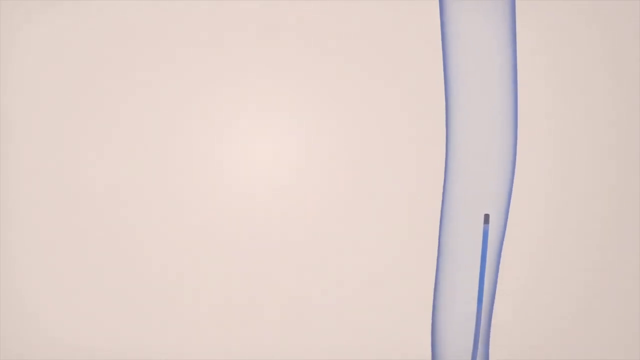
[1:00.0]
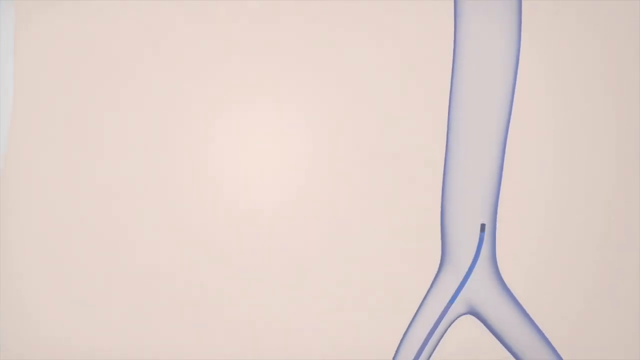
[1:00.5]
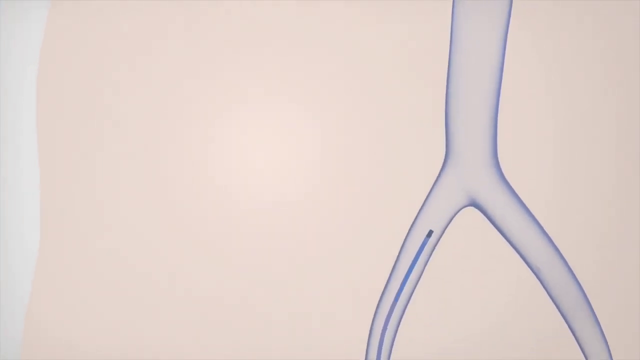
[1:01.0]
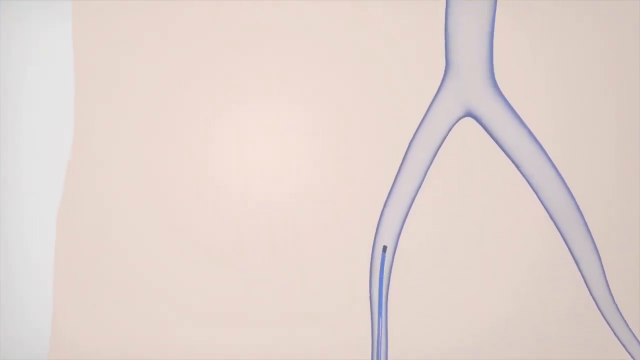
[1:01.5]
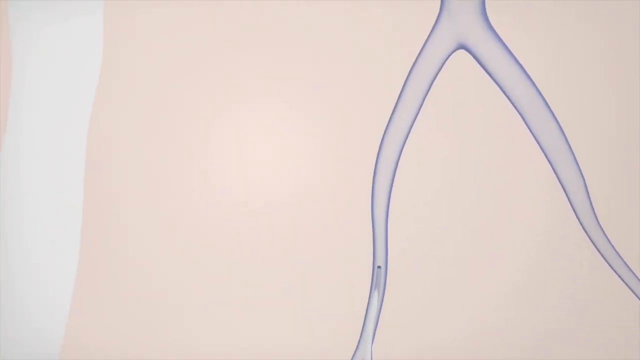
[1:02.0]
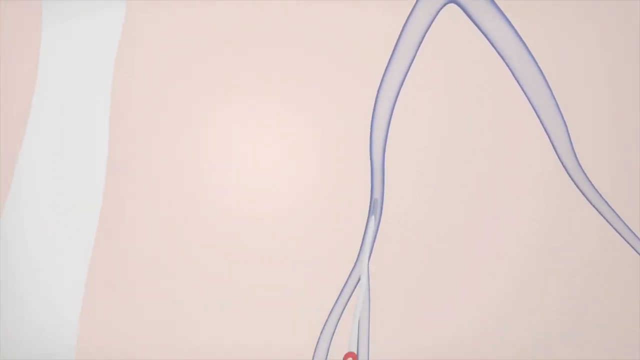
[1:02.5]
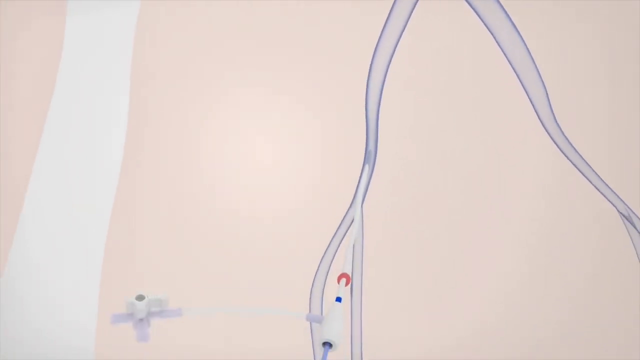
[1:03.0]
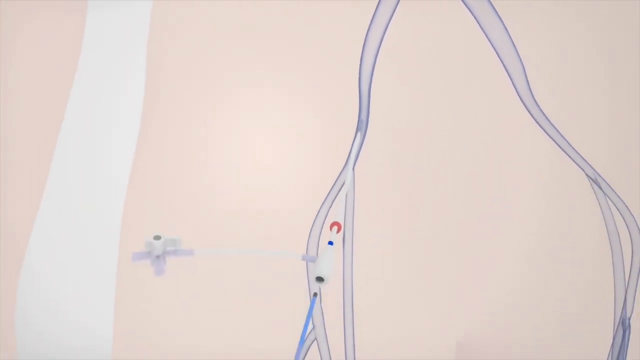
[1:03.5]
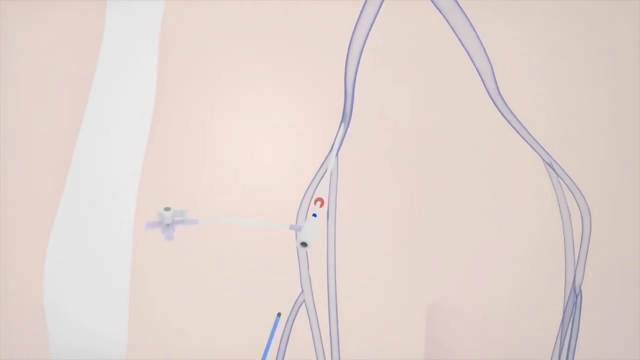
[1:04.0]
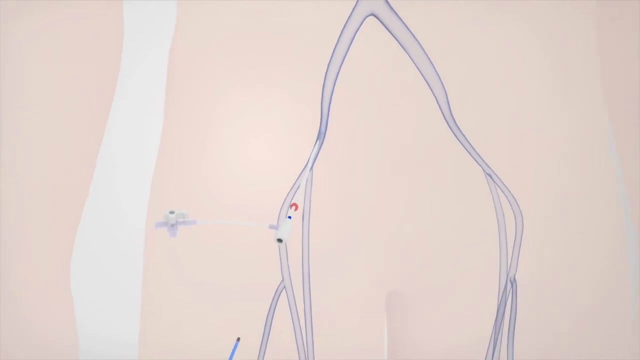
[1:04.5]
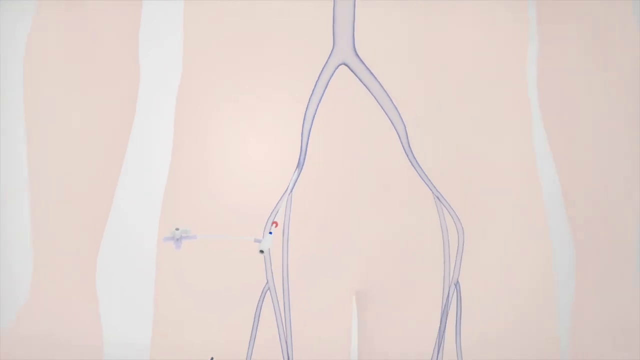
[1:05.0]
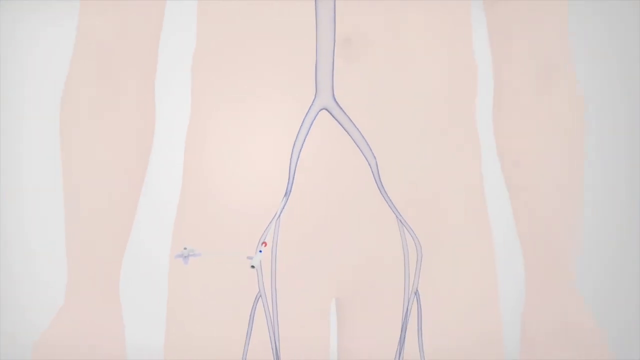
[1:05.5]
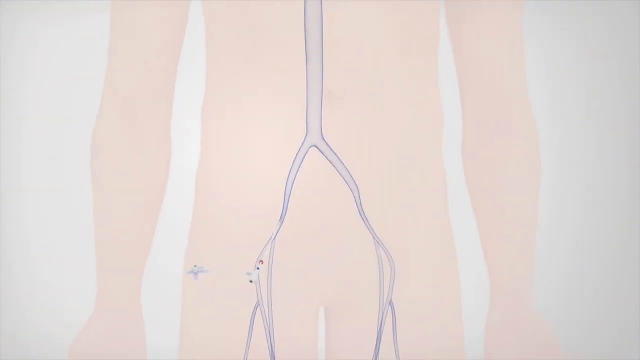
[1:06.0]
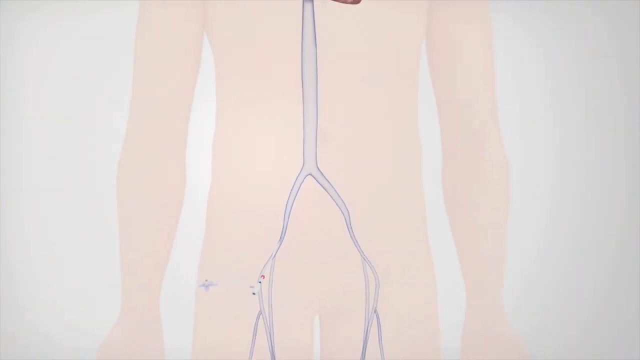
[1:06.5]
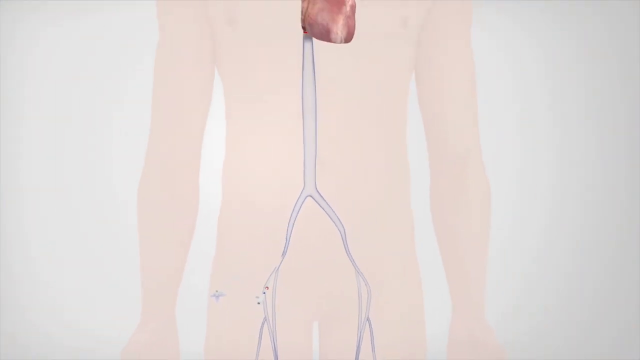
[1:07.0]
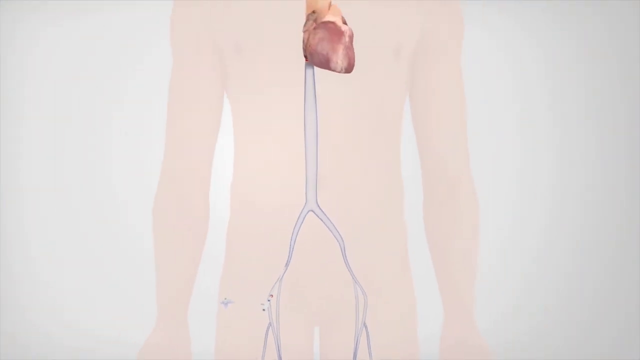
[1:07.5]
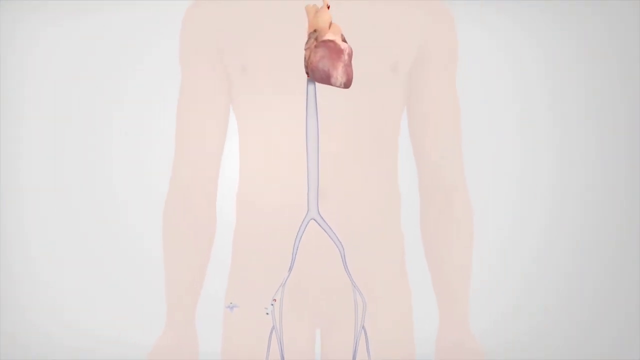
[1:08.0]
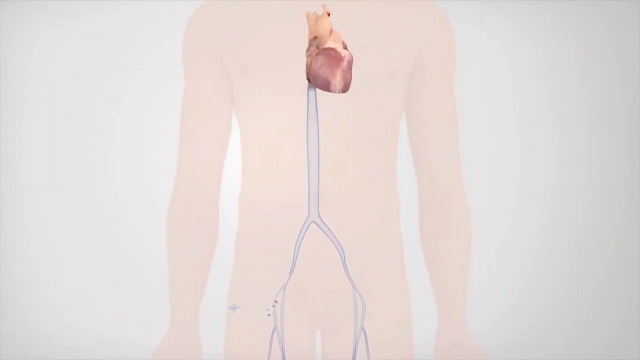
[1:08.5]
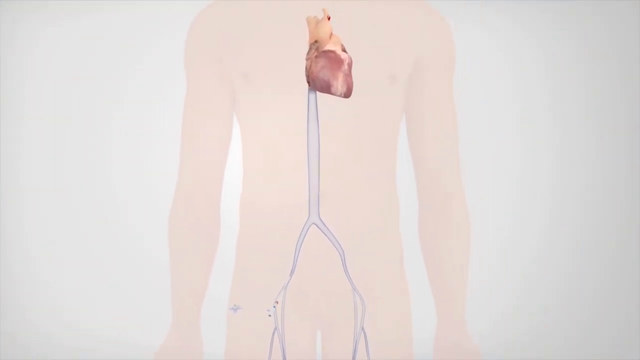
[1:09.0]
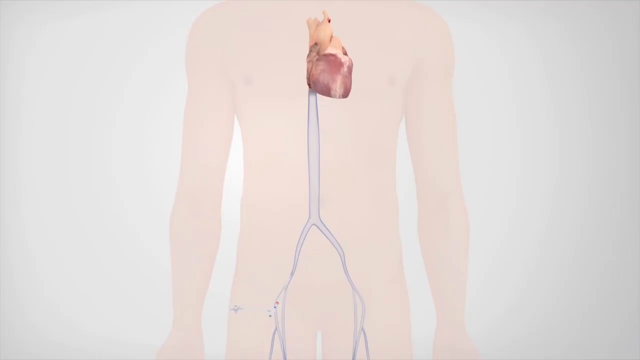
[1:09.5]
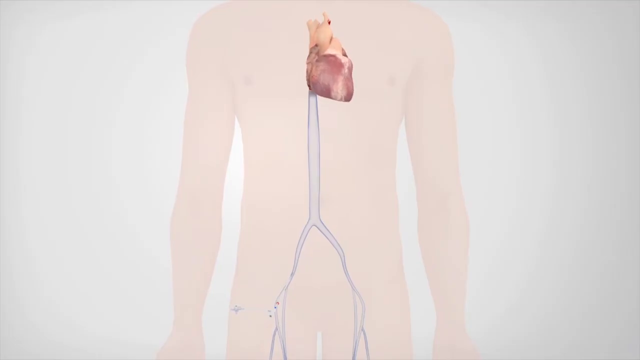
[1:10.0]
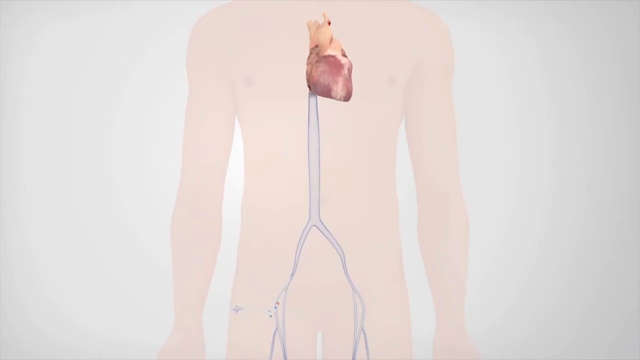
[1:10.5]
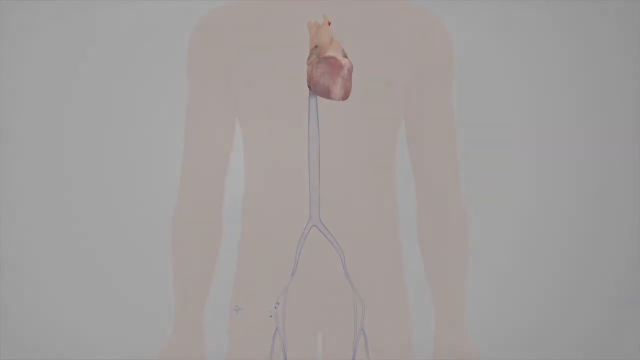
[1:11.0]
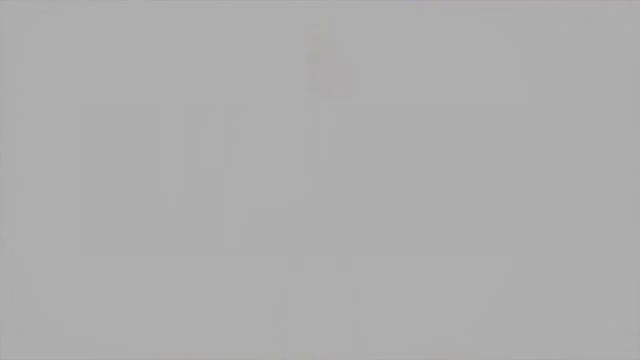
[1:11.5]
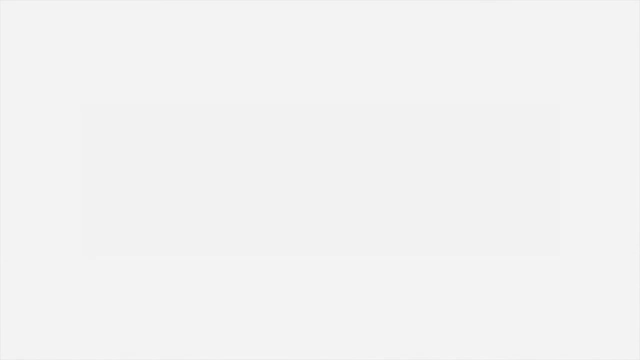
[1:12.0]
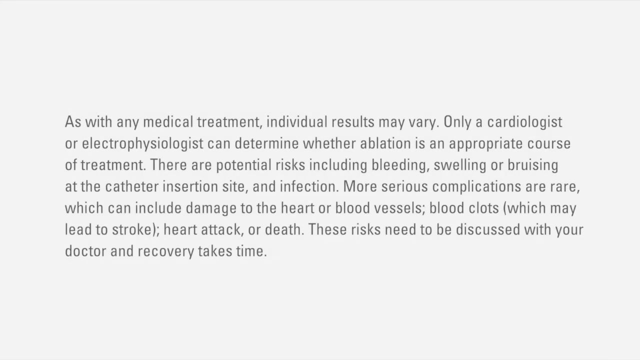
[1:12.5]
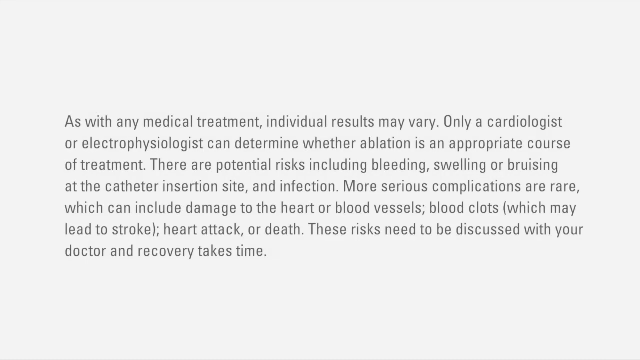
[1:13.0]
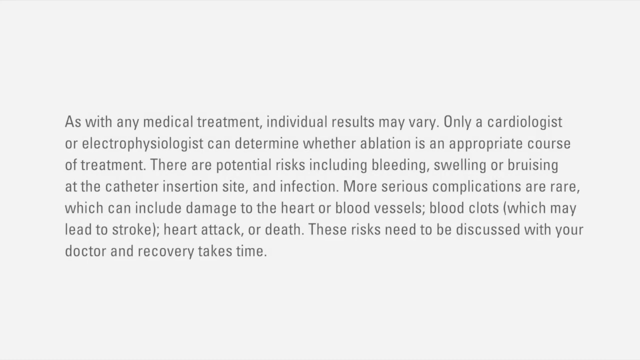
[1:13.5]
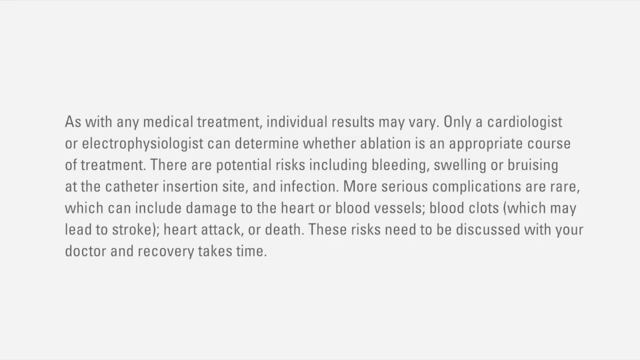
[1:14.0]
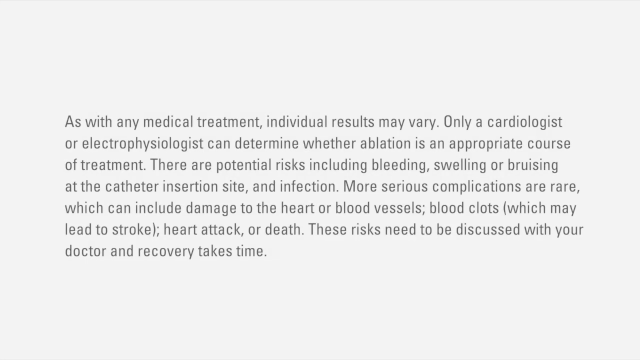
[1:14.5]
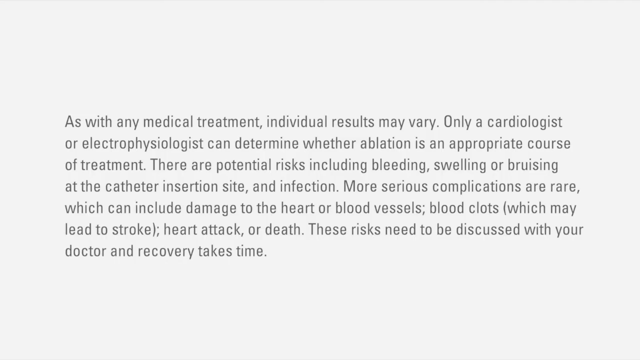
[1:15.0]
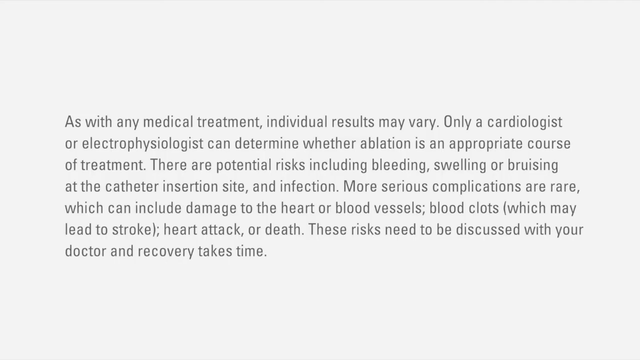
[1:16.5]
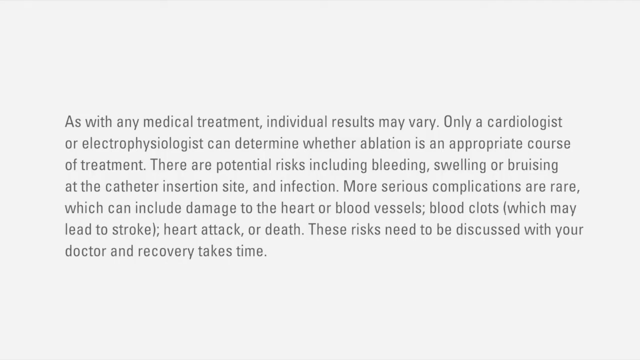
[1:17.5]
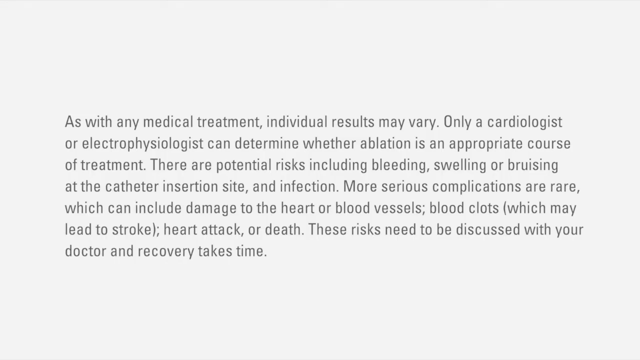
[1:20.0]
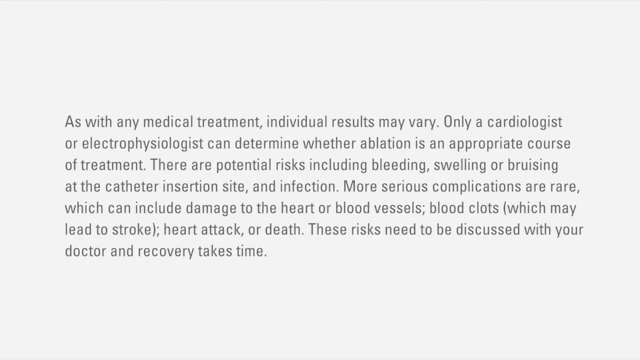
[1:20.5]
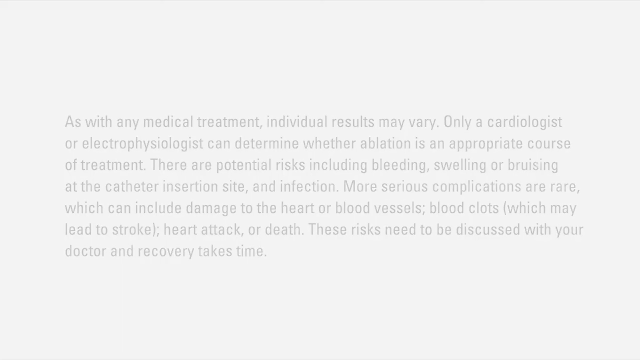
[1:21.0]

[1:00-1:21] Text appears reading: "As with any medical treatment, individuals result may vary. Only a cardiologist or electrophysiologist can determine whether ablation is an appropriate course of treatment. There are potential risks, including bleeding, swelling, or bruising at the catheter insertion site." It continues: "more serious complications are rare, which can include damage to the heart or blood vessels, blood clots, which may lead to a stroke, heart attack, or death. These risks need to be discussed with your doctor and recovery takes time."